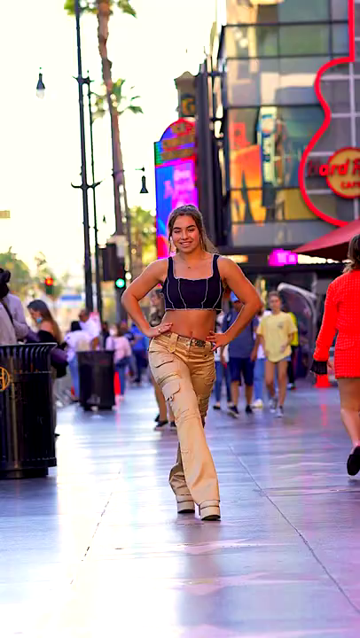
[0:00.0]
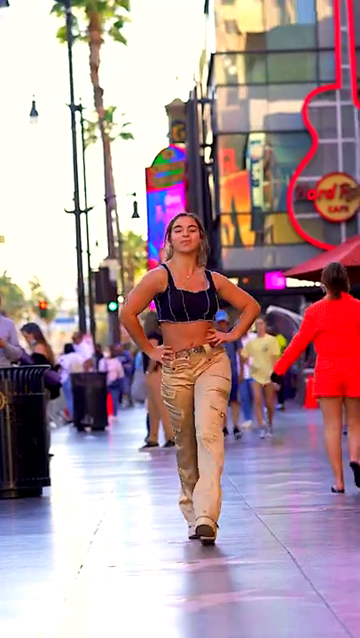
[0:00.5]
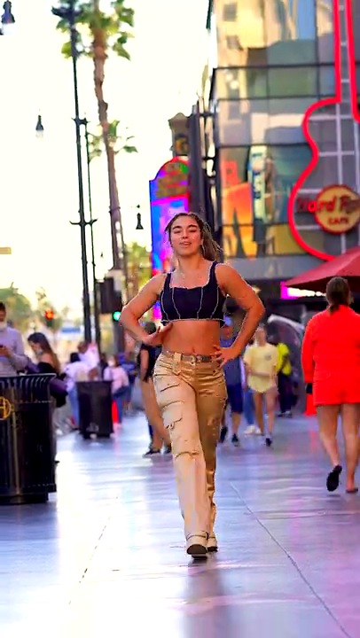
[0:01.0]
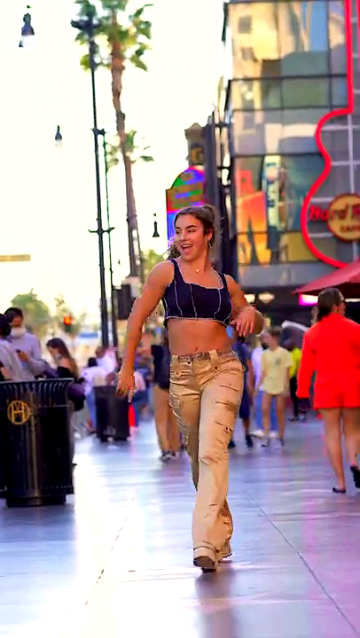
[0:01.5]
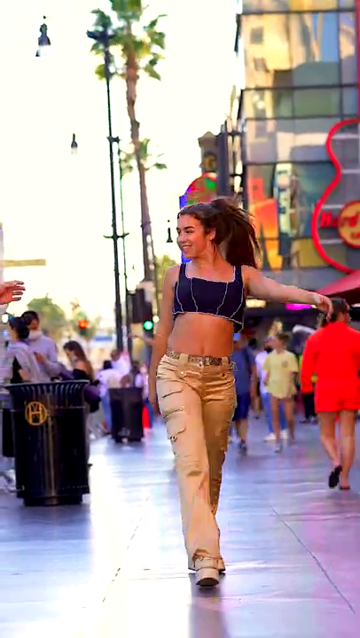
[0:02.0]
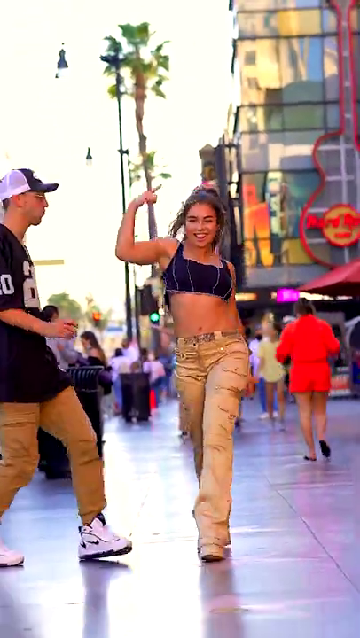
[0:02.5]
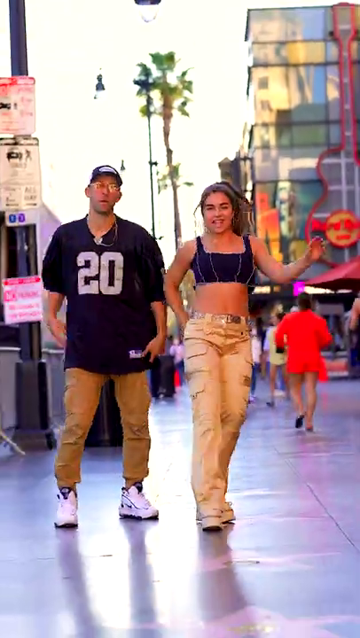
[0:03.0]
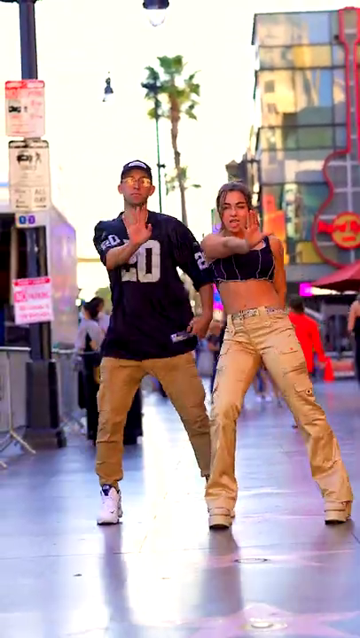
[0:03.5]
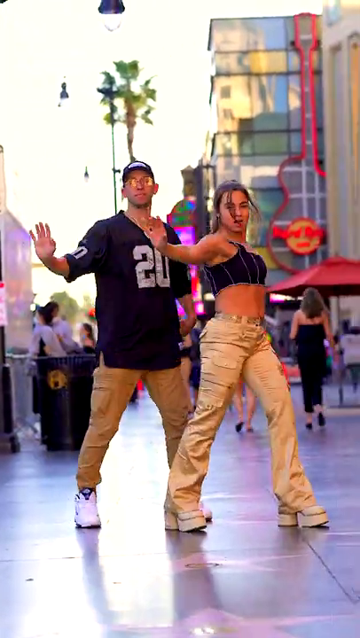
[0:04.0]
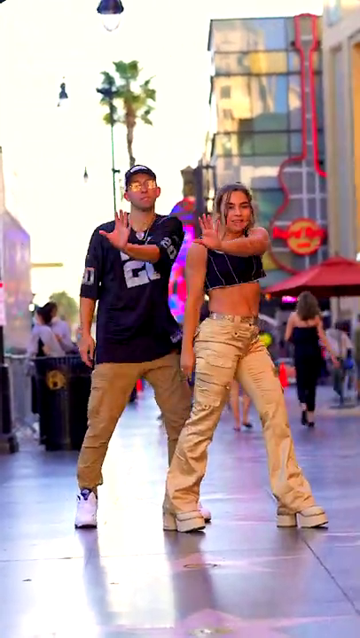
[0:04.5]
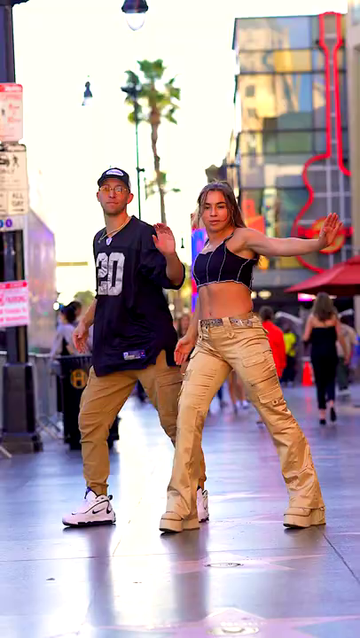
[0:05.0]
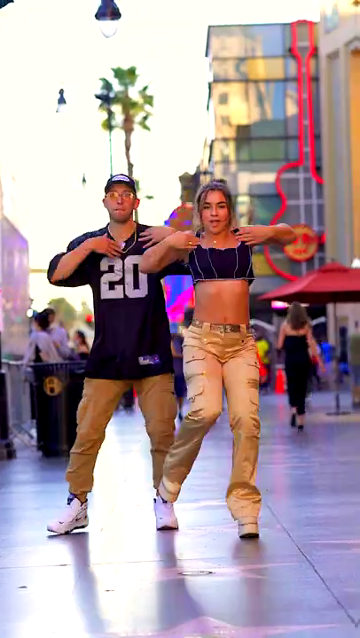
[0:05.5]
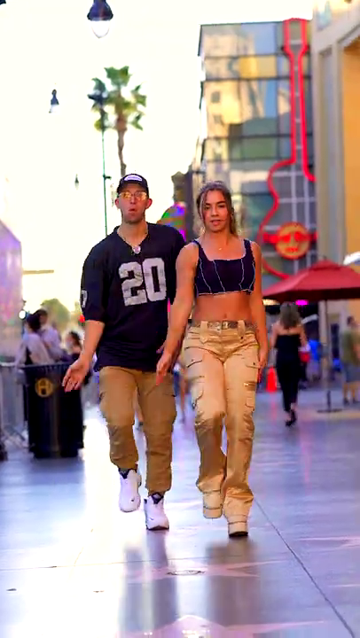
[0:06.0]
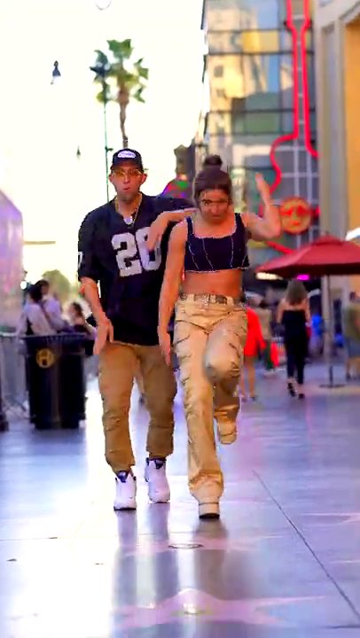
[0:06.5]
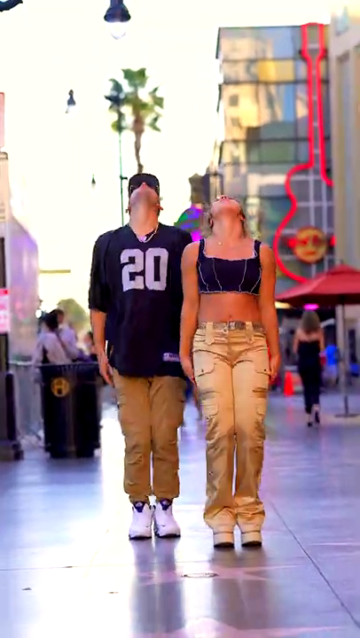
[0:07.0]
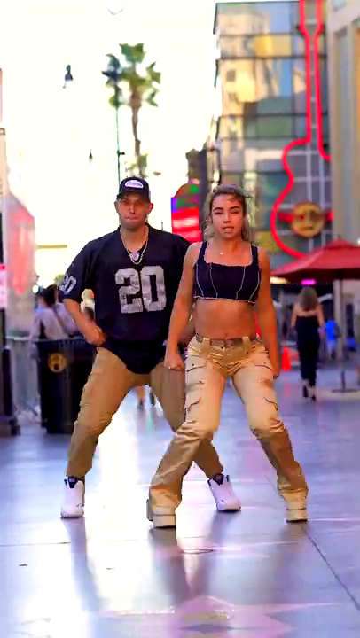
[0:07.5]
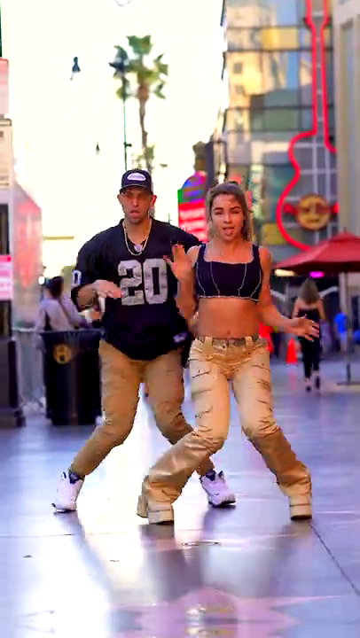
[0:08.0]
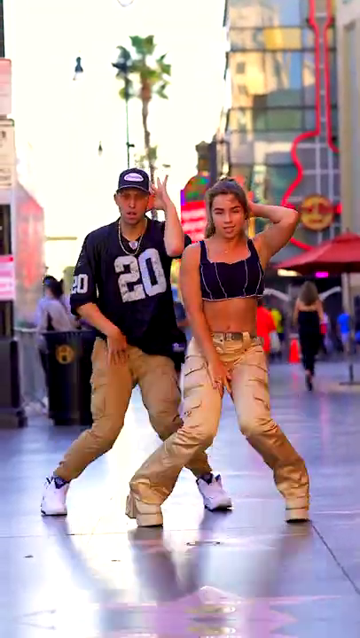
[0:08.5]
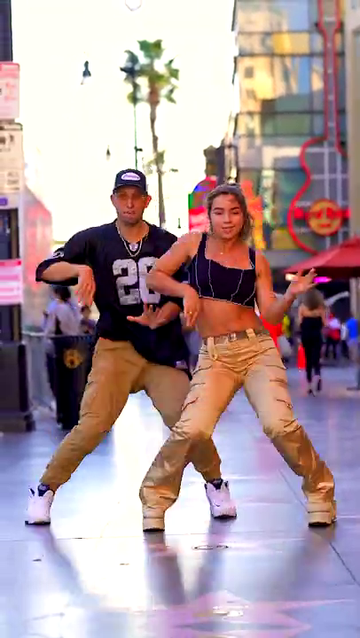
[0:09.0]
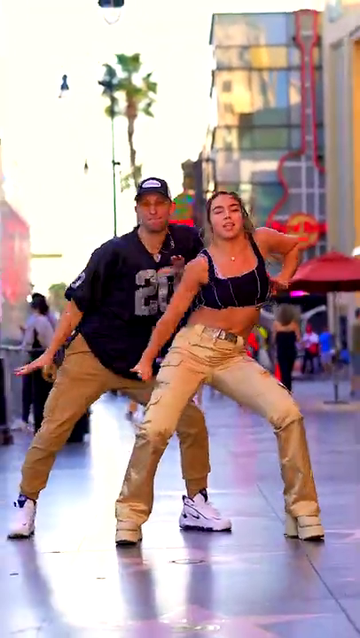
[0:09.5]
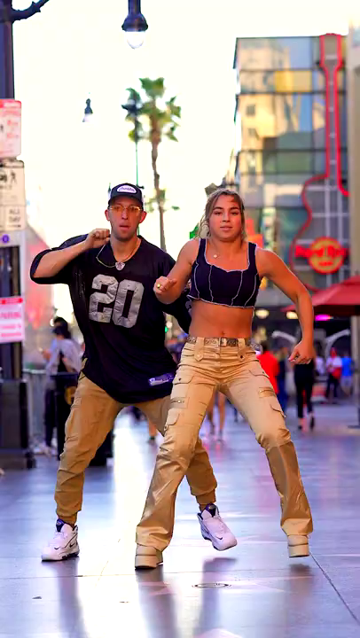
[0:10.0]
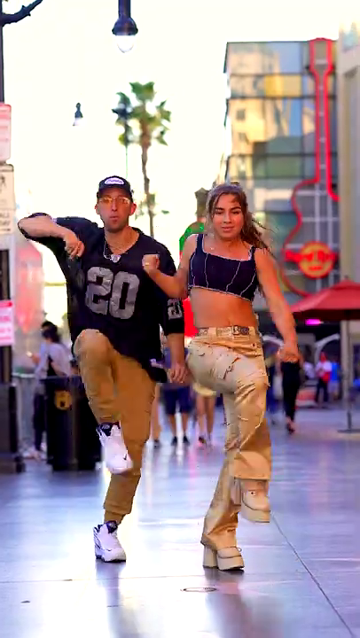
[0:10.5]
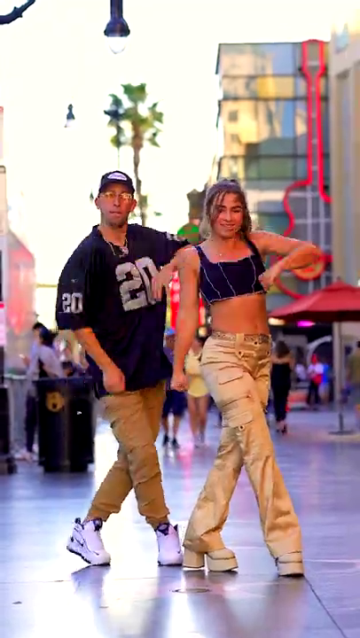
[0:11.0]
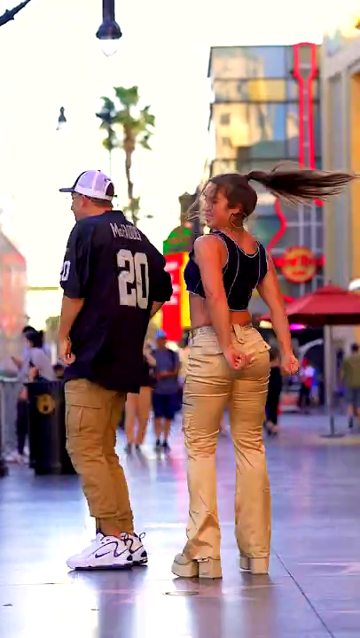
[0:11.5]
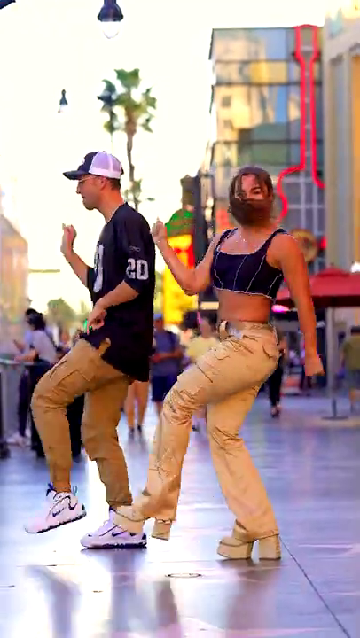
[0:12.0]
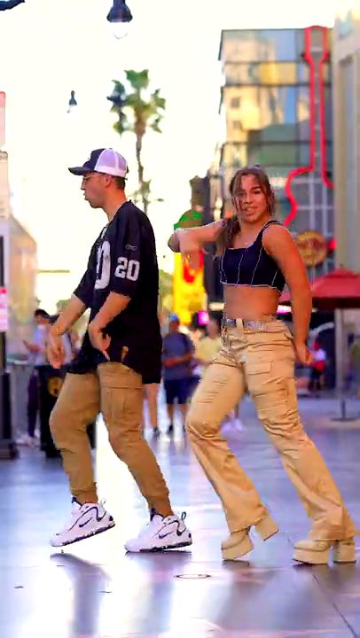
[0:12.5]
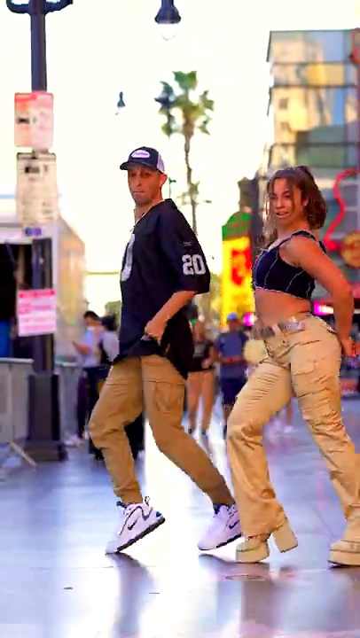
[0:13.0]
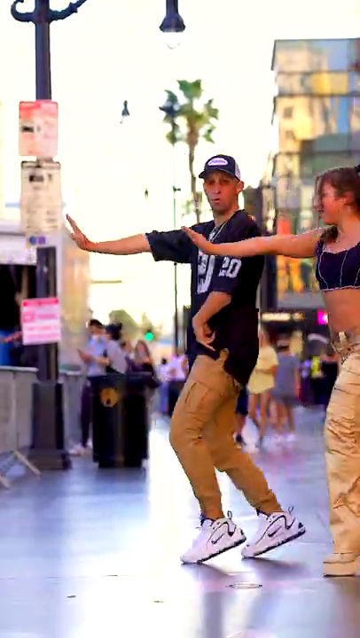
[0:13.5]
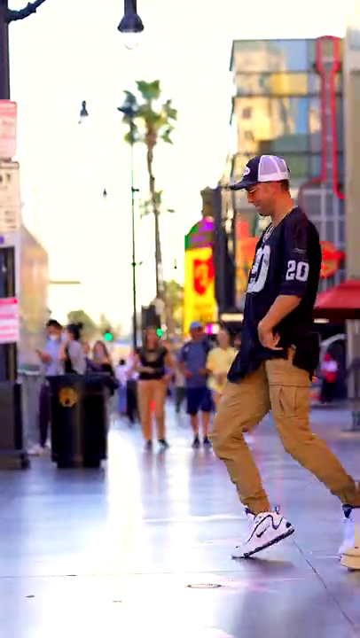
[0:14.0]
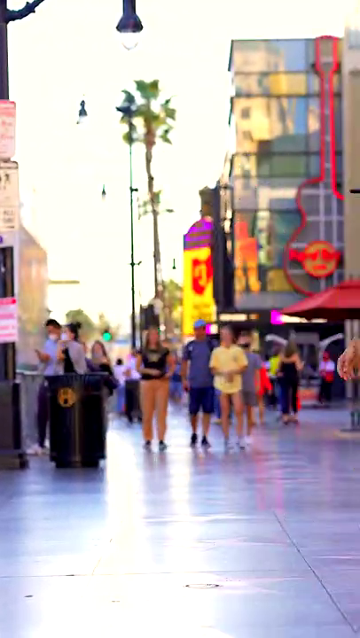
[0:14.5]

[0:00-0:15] What looks like cell phone camera footage, shot as vertical video, shows mainly two people dancing in the street. It starts with a woman walking toward the camera with a kind of sassy, model-type walk. She wears shiny golden pants, what look like quite tall golden platform shoes, and what looks like a sports-bra-type top that is black with some white lines on it, leaving her midriff showing. She is quite tanned, and her brown hair is mostly pulled up in a ponytail behind her head. As she walks toward the camera, a guy joins her on her left-hand side. He wears tan-colored pants, white sneakers, a black jersey with the number 20 on it in white, what looks like a baseball cap, reflective sunglasses, and apparently a chain. Both step toward the camera doing dance steps: they kind of pivot to the left and to the right, shake their legs and twist around, in a style that looks kind of similar to a Michael Jackson-type dance. They then moonwalk off toward the right-hand side of the frame. The video appears to have been taken in a street, apparently in daytime since the background is quite light, and some people walking around and some buildings are visible.